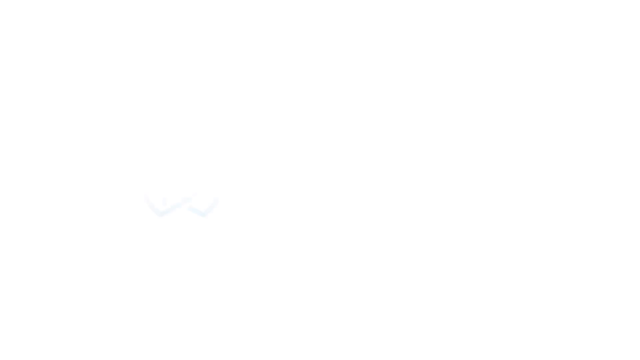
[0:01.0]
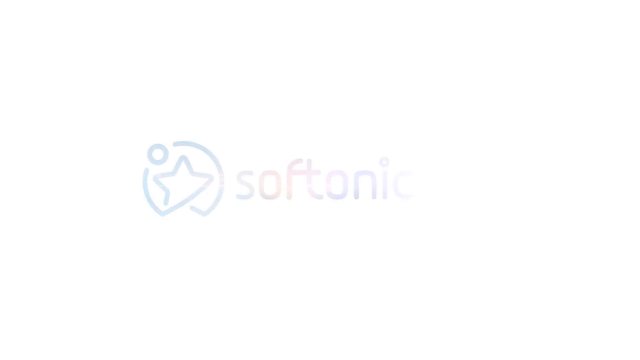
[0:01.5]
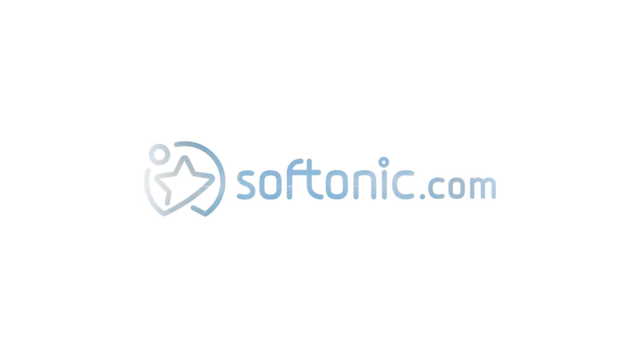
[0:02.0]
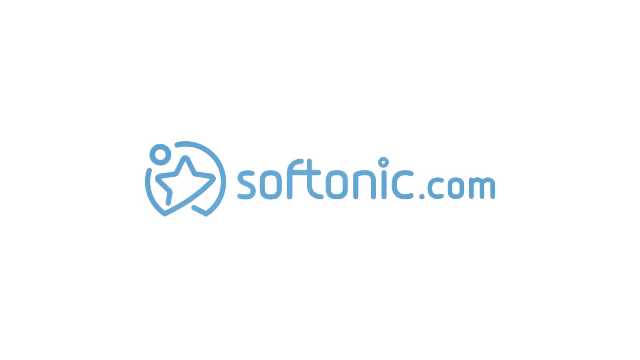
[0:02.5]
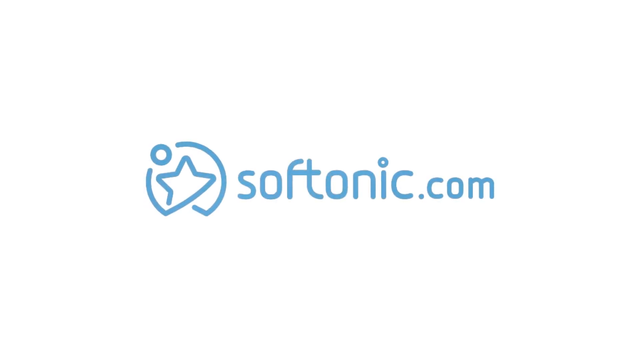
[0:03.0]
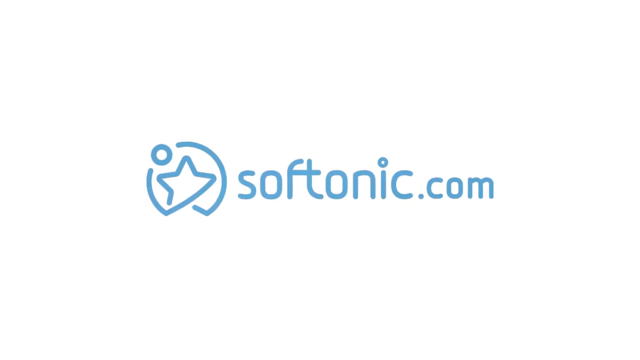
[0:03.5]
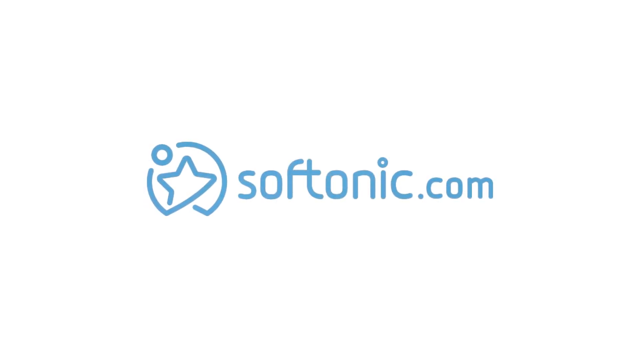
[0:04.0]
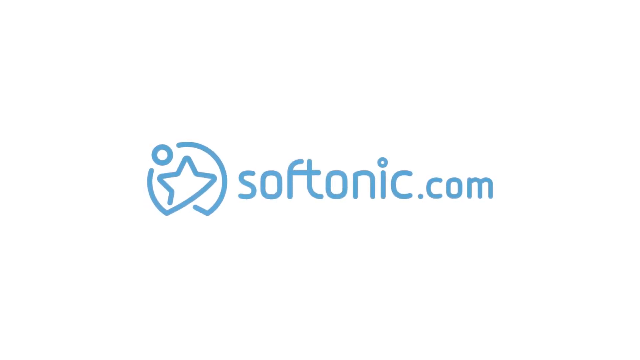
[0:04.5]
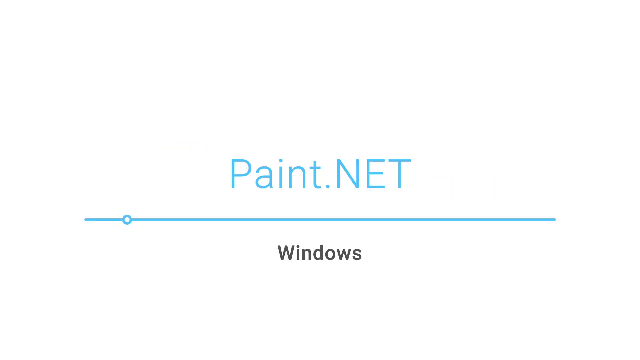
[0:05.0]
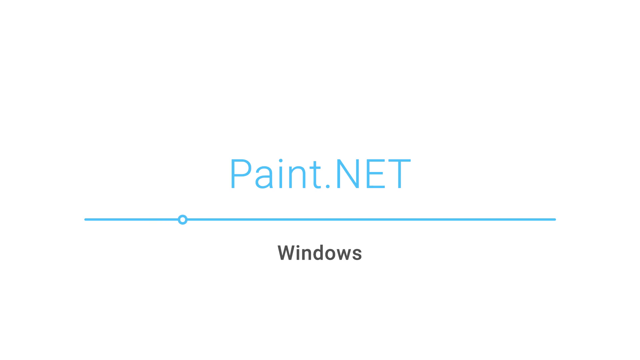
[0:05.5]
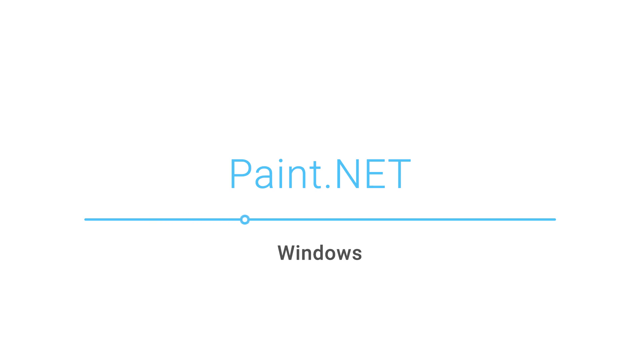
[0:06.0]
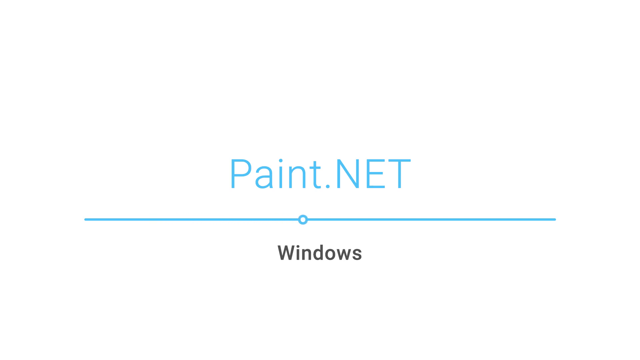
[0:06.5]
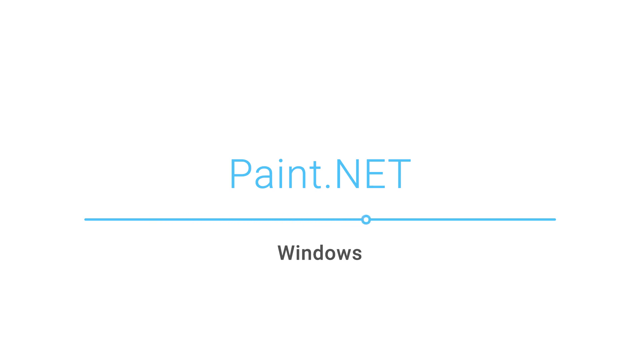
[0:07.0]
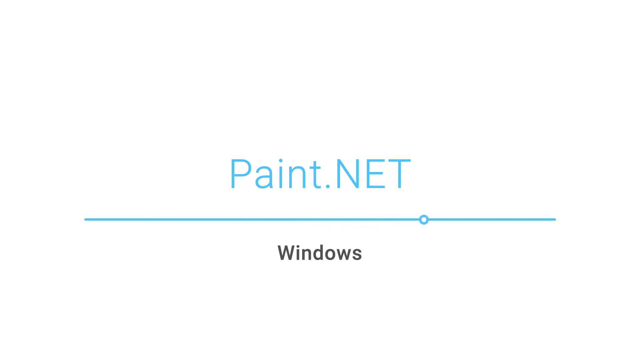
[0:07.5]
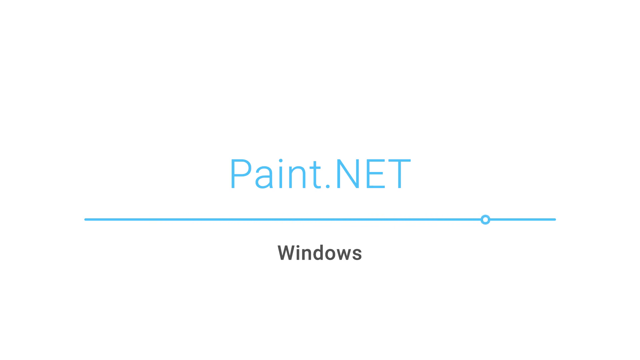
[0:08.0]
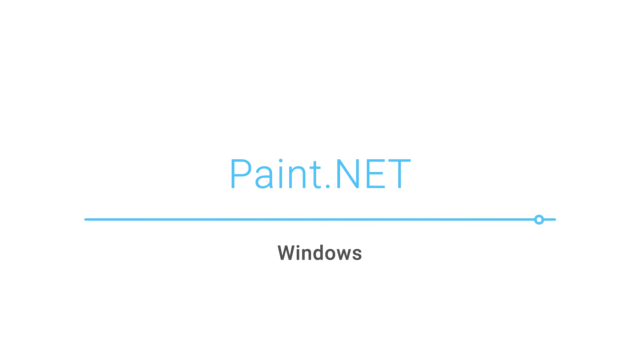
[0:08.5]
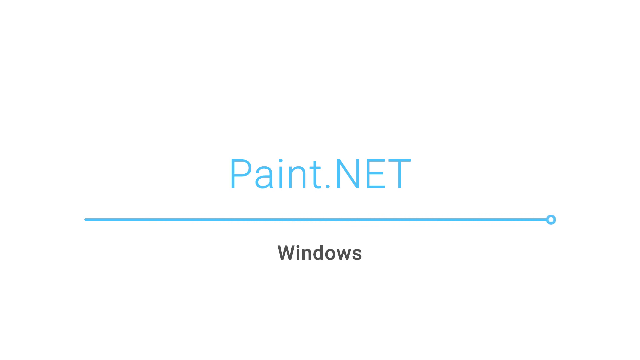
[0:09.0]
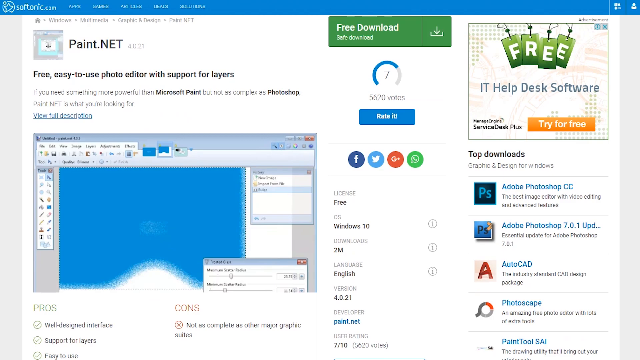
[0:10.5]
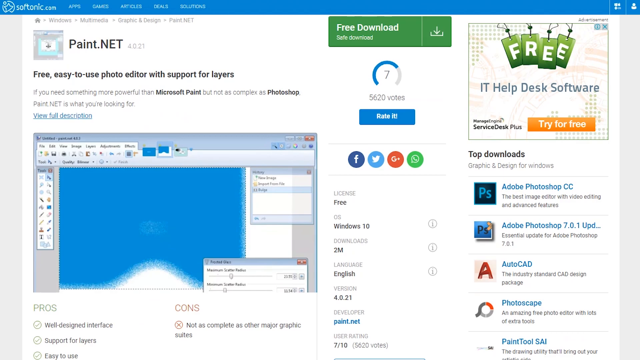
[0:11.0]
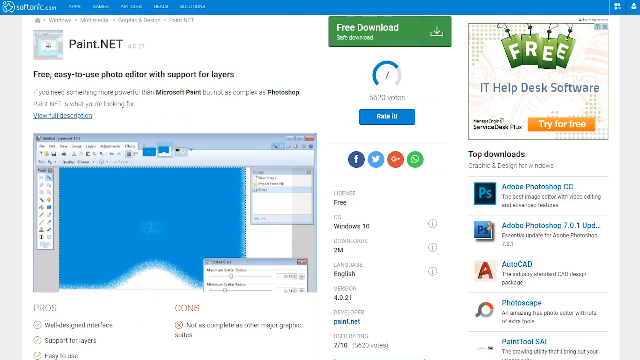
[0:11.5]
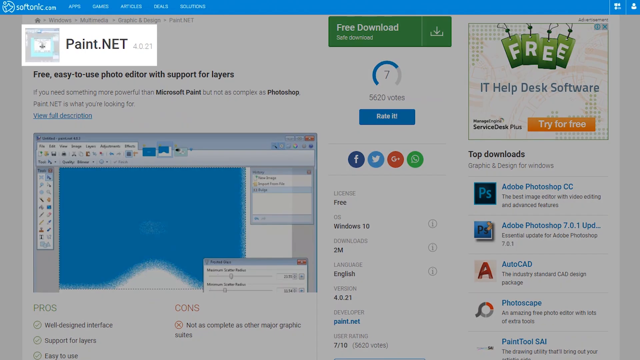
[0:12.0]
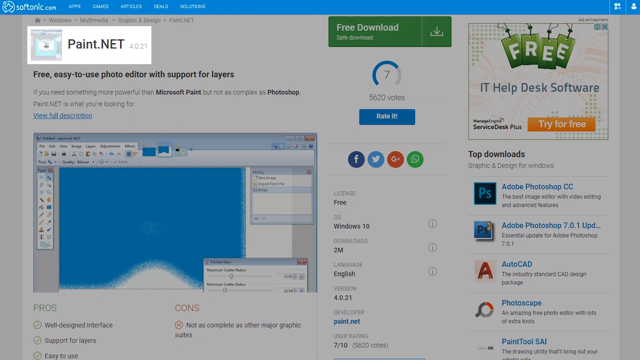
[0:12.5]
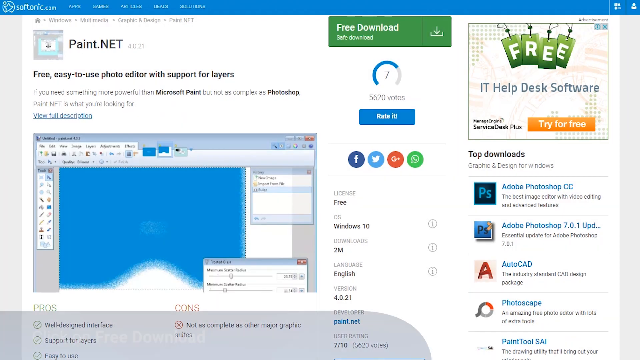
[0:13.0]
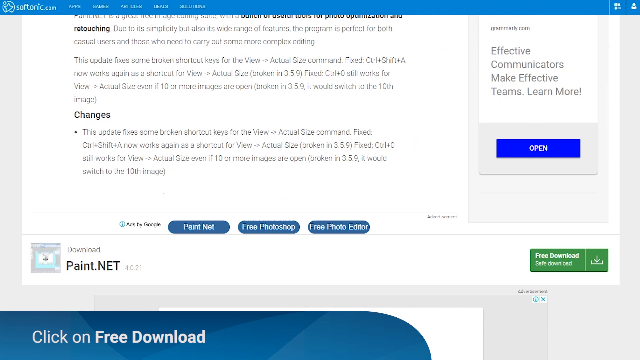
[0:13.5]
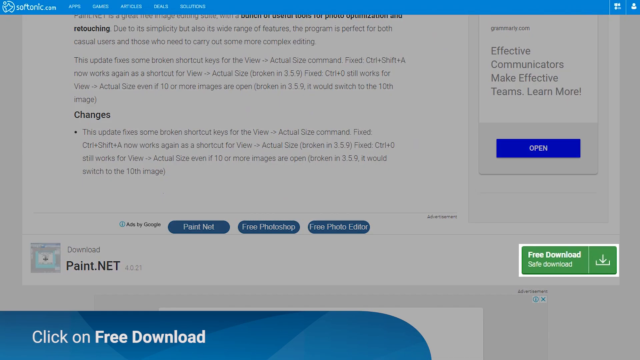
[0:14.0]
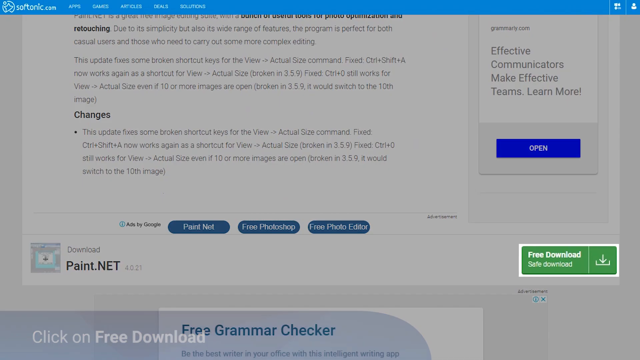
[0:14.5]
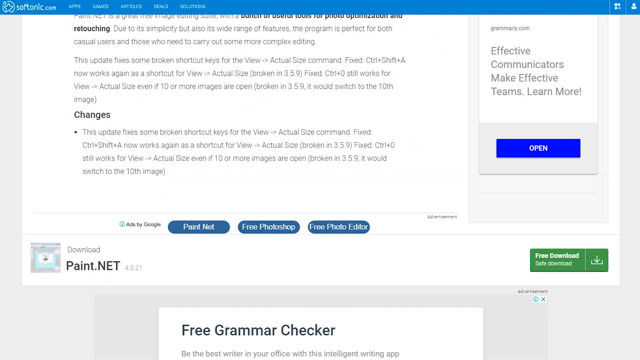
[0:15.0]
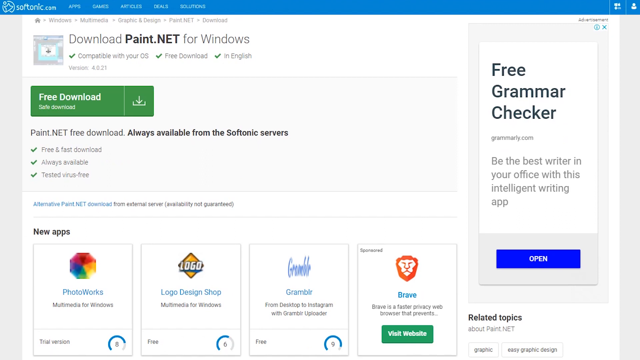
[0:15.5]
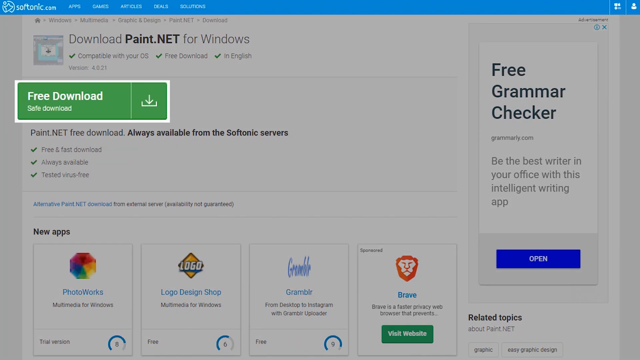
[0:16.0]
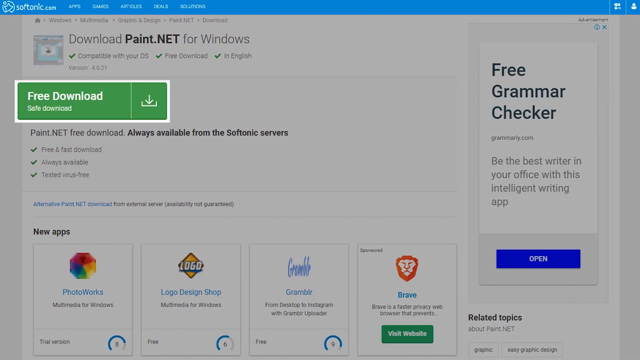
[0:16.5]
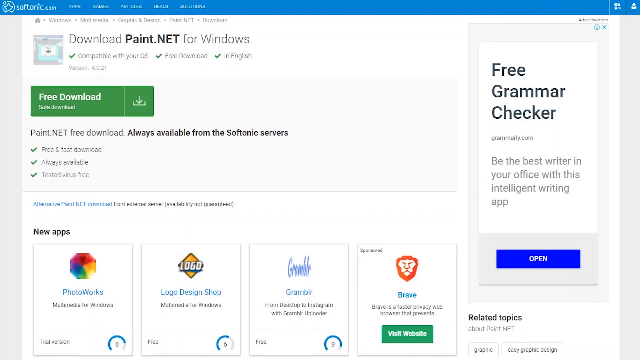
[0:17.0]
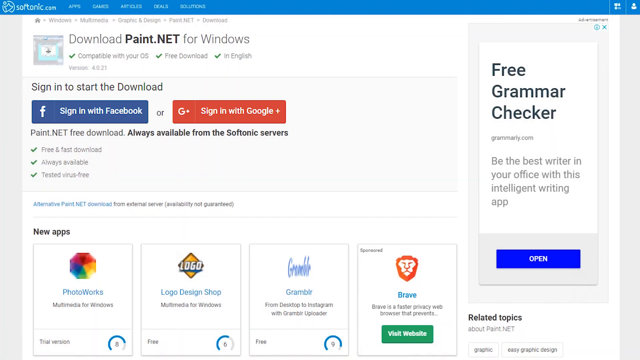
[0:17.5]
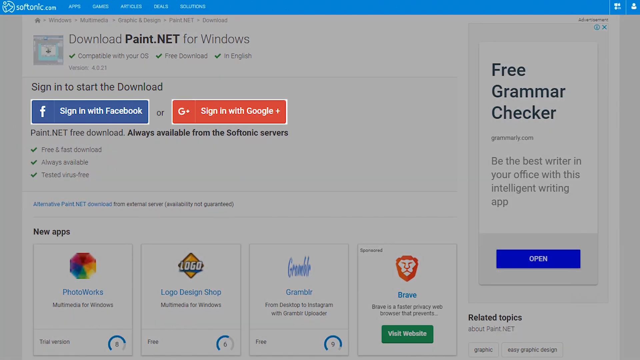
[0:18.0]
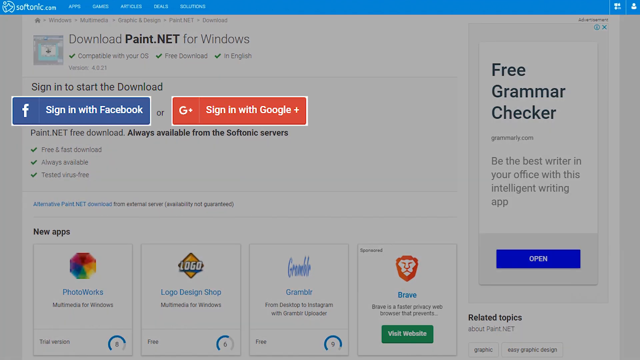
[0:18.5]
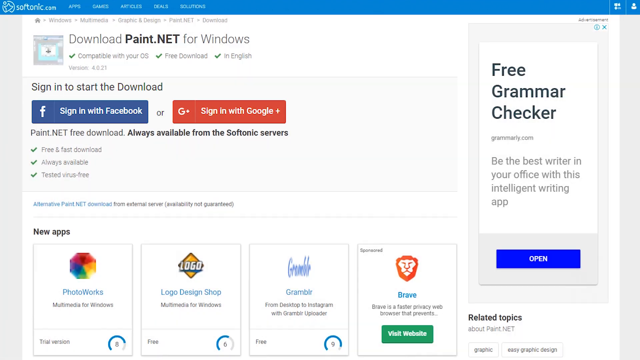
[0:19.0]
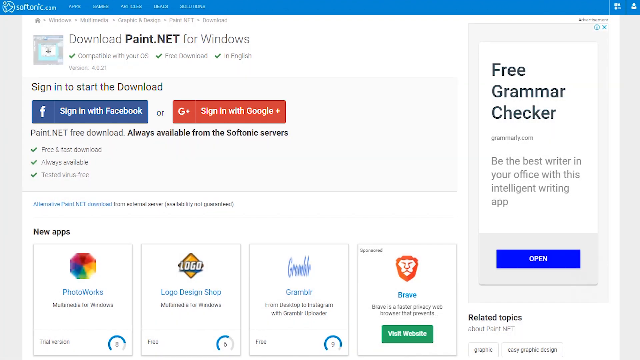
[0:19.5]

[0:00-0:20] The video begins with a white screen, then the Softonic.com logo fades in and gradually shrinks slightly in an animation. The icon to the left of Softonic.com appears to be half a star encircled, with a small circle at the top left. The bottom part of the circle is cut out; one line of the star joins the circle and the other part of the line lifts up toward the other line. The screen then shows a screenshot of the softonic.com website, which has a blue header containing the navigation and the logo. An icon of the paint.net application is visible, as this is the page on display, along with the title "paint.net", a brief description of the software, a link to see the full description, and a screenshot of the application. To the right of that is a green free download button, followed by the number of votes, social sharing icons, and information such as license, operating system, downloads, language, version and developer. Further to the right are an advert and some top downloads.